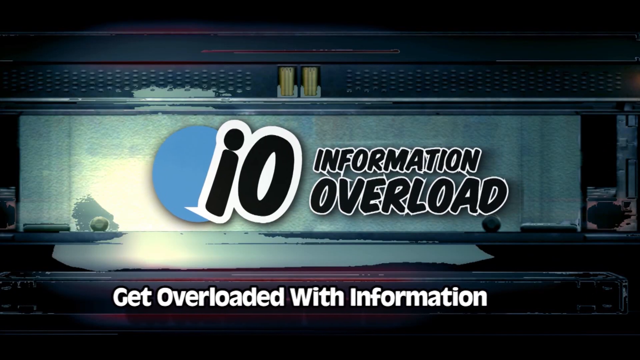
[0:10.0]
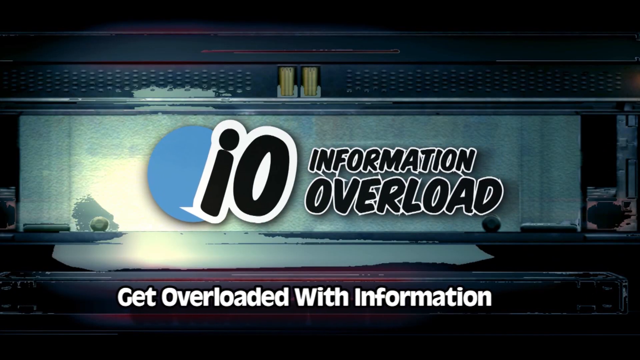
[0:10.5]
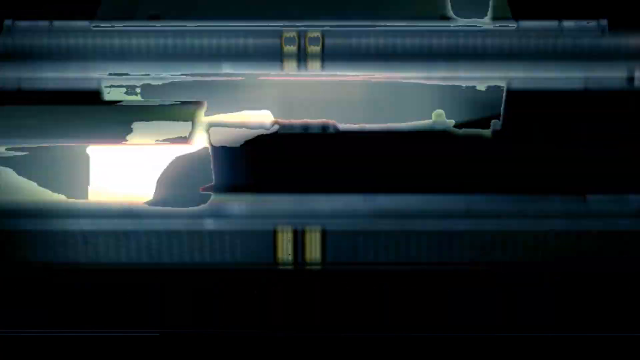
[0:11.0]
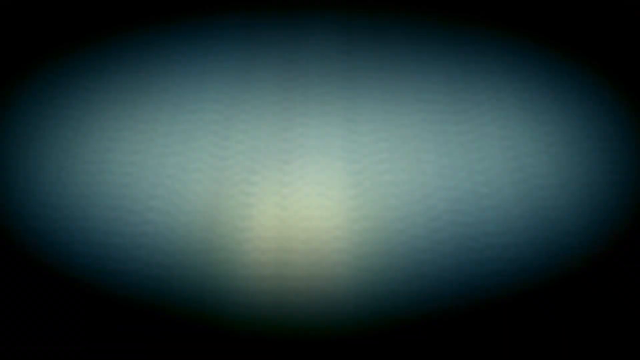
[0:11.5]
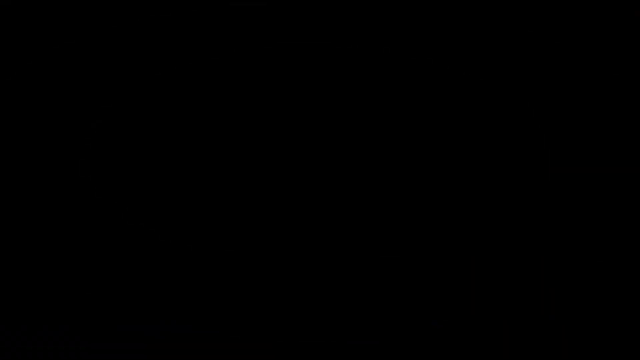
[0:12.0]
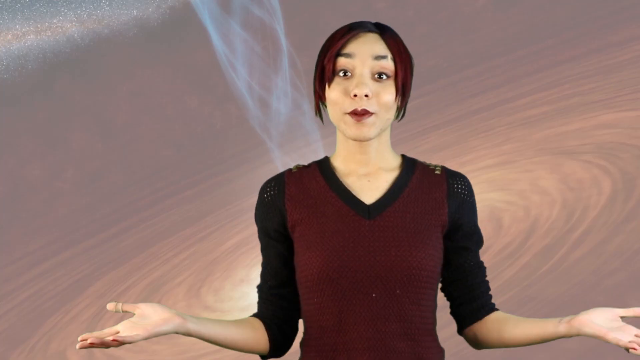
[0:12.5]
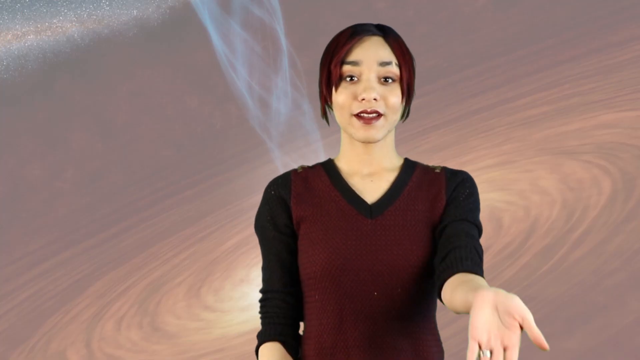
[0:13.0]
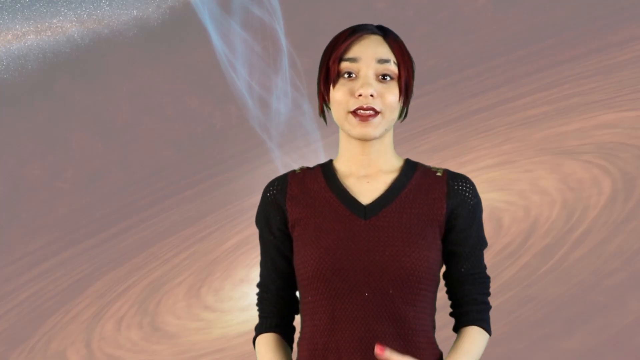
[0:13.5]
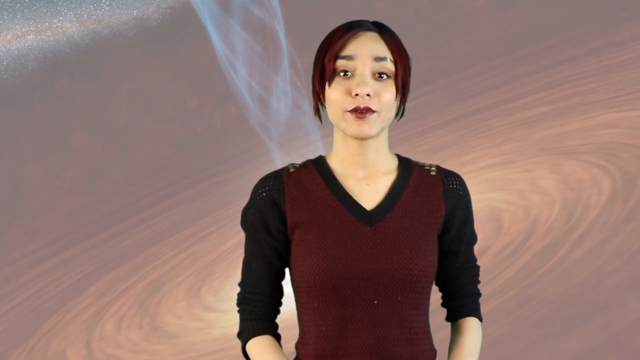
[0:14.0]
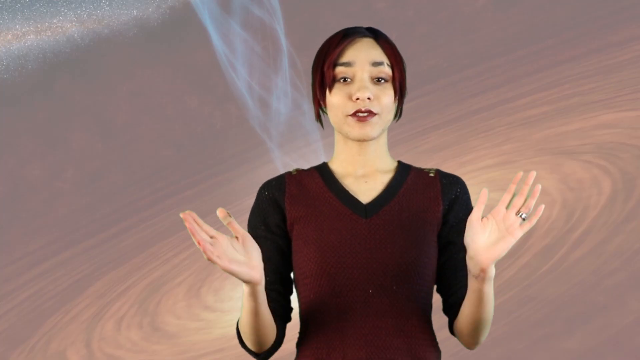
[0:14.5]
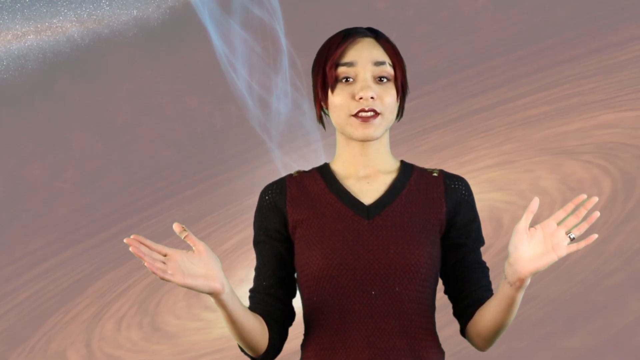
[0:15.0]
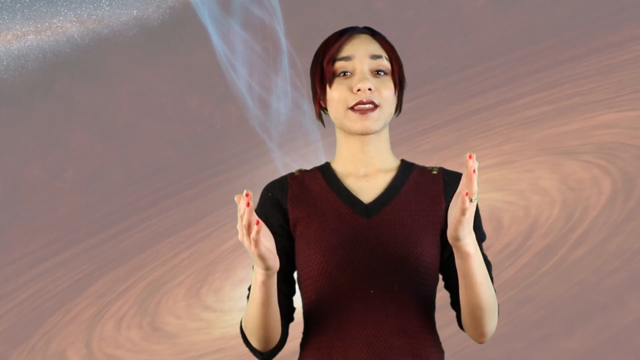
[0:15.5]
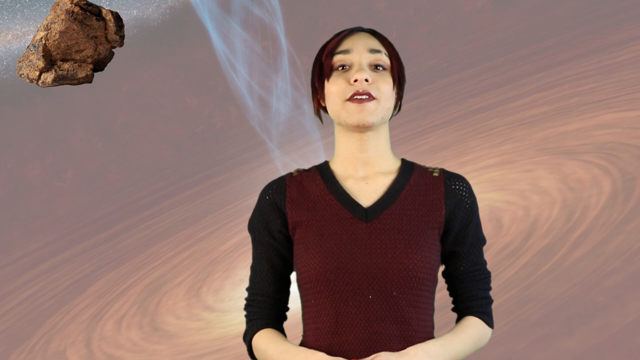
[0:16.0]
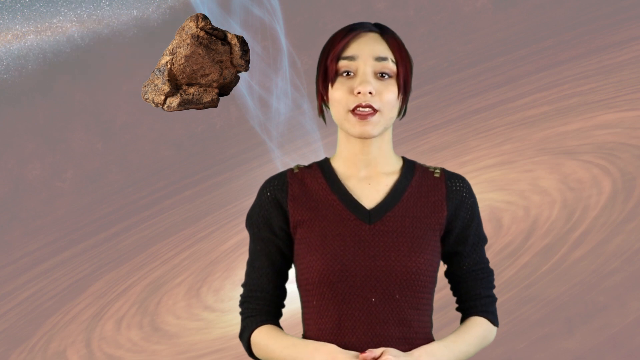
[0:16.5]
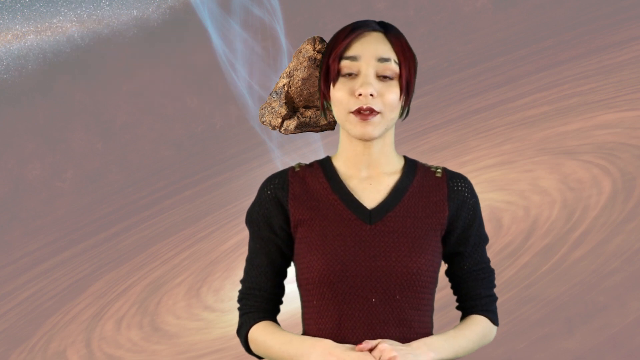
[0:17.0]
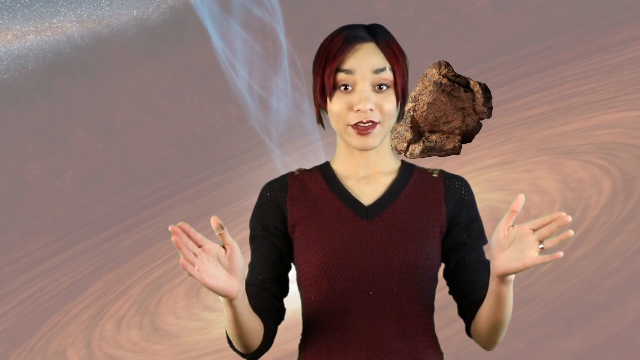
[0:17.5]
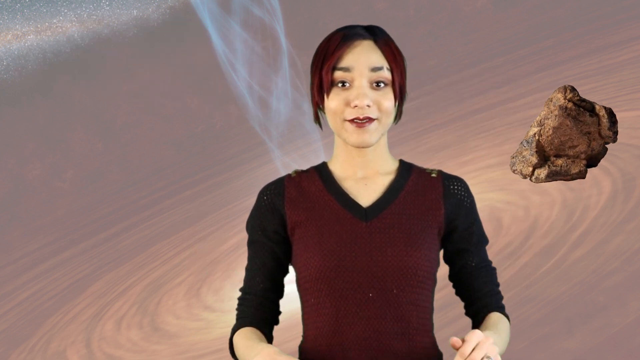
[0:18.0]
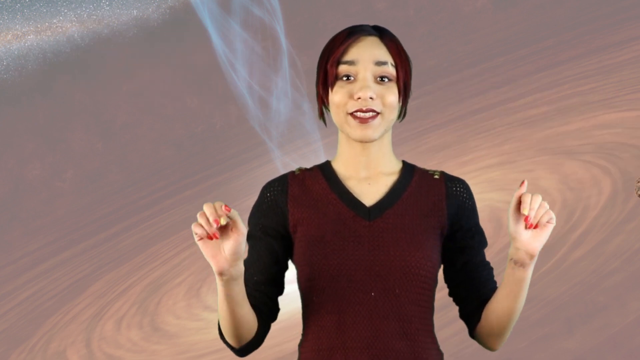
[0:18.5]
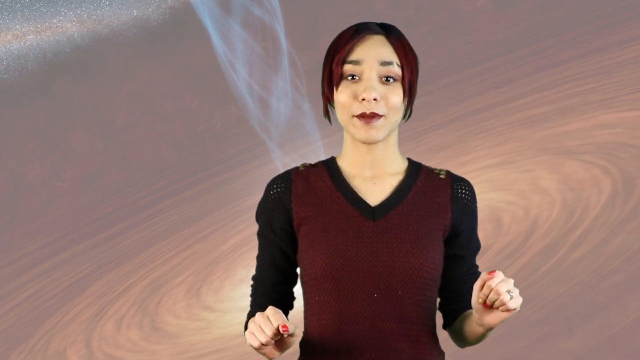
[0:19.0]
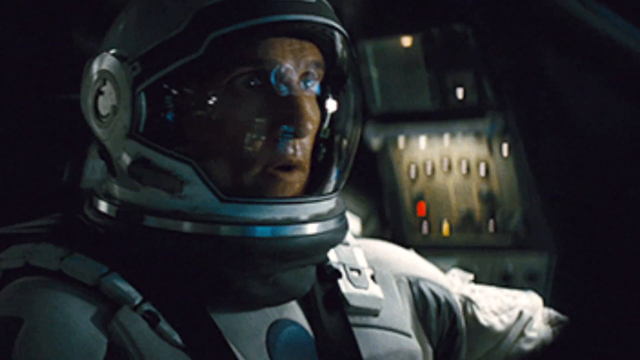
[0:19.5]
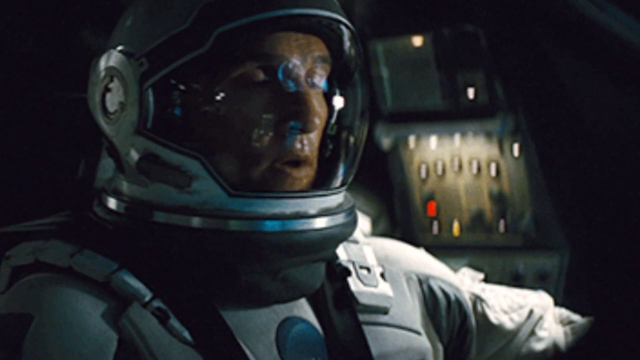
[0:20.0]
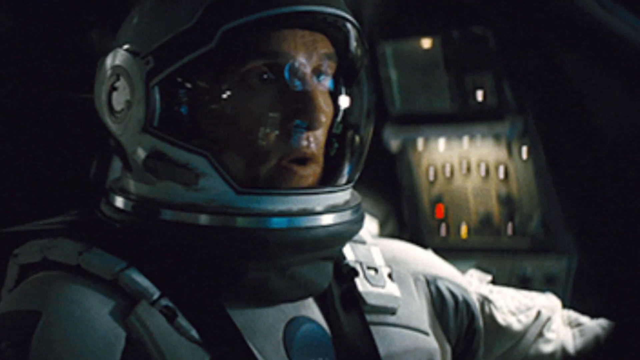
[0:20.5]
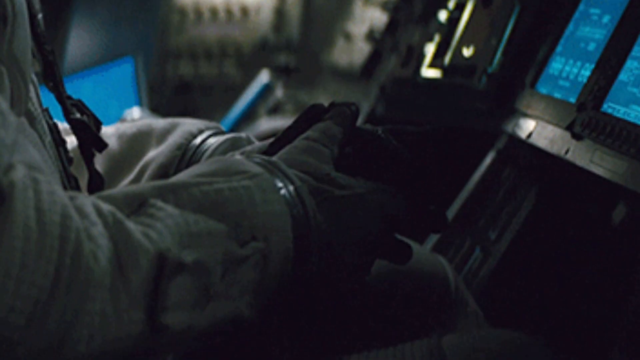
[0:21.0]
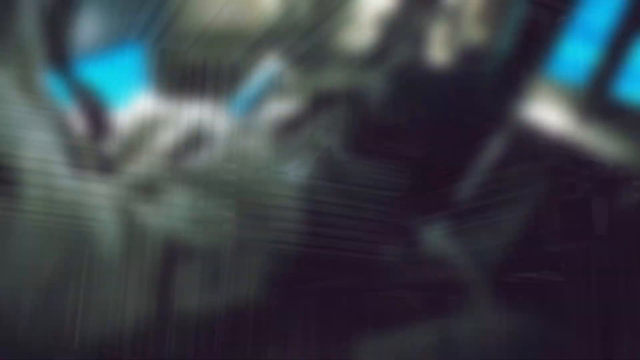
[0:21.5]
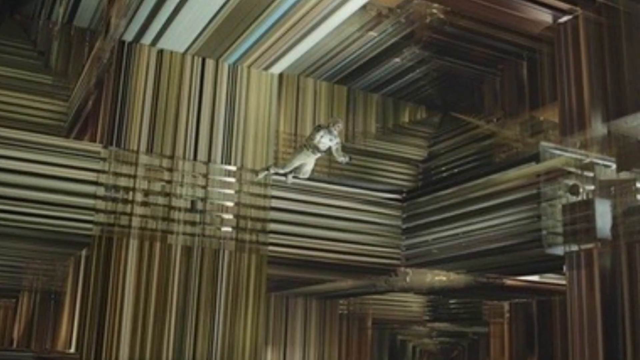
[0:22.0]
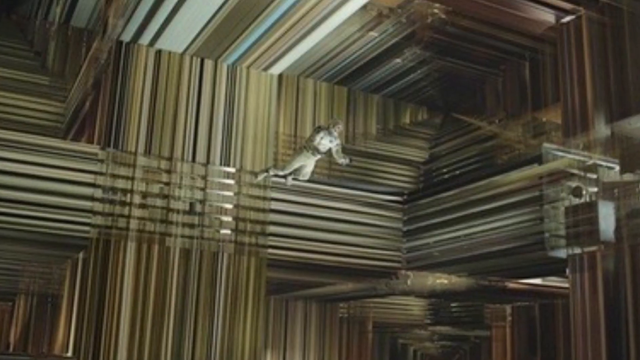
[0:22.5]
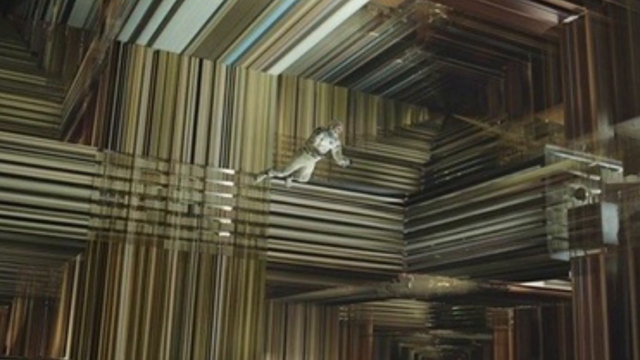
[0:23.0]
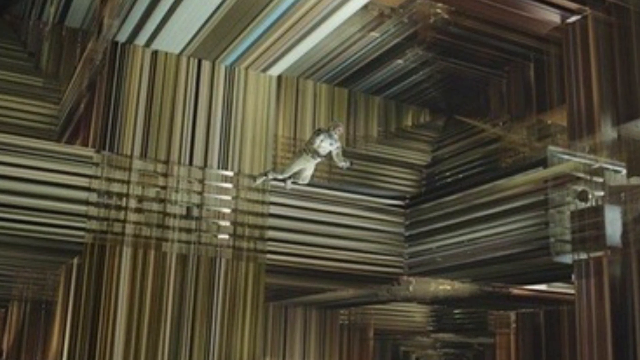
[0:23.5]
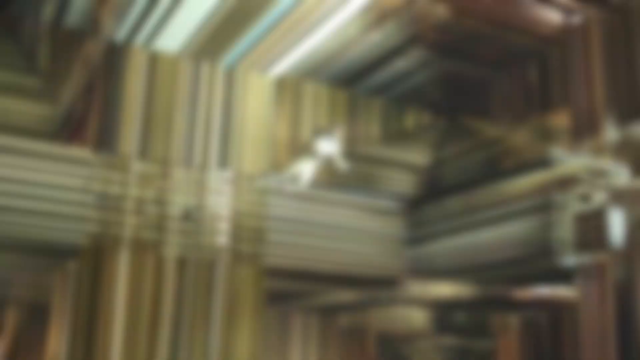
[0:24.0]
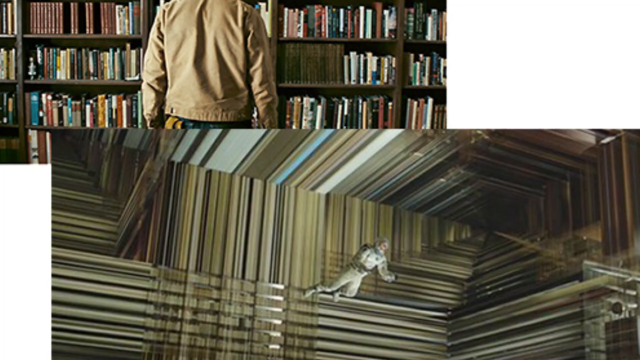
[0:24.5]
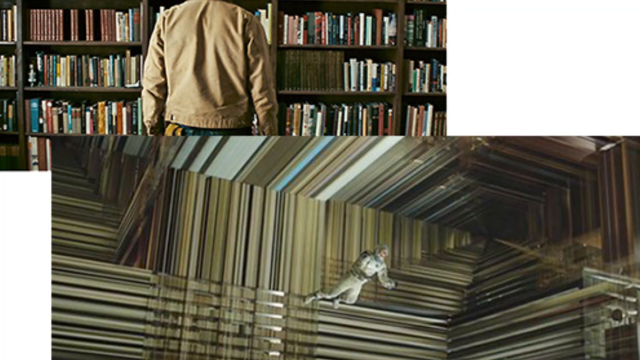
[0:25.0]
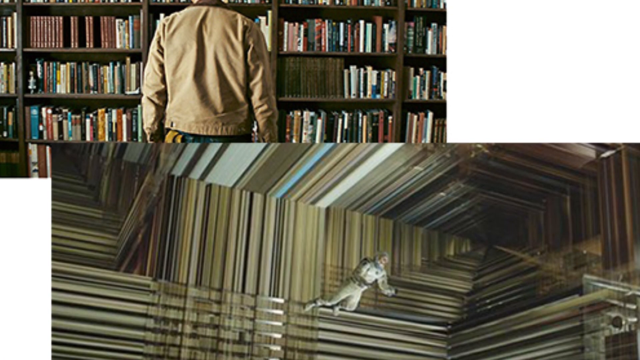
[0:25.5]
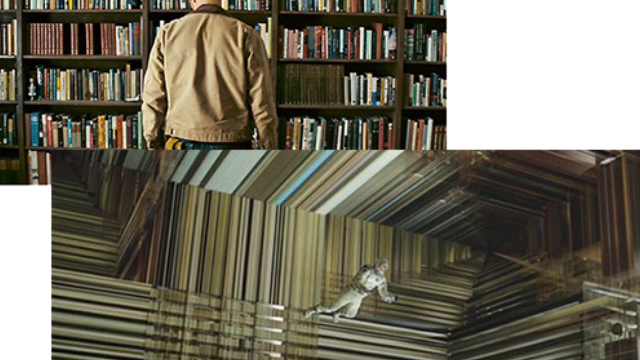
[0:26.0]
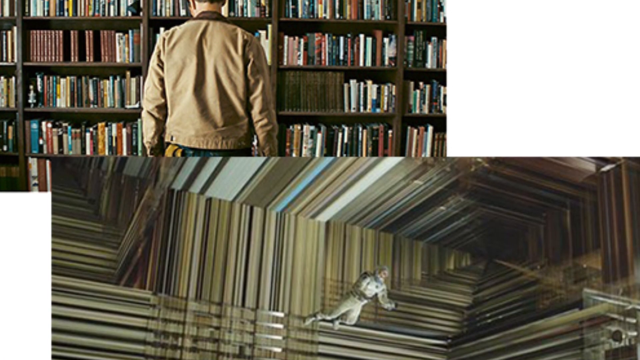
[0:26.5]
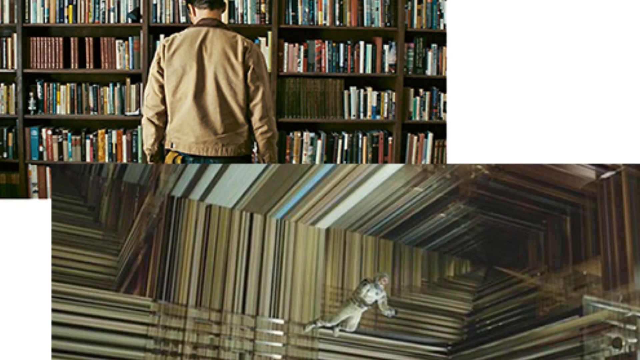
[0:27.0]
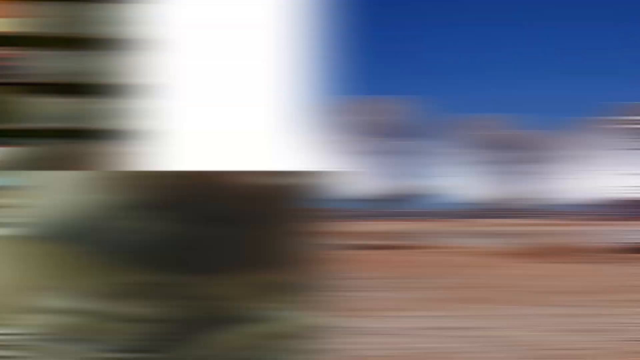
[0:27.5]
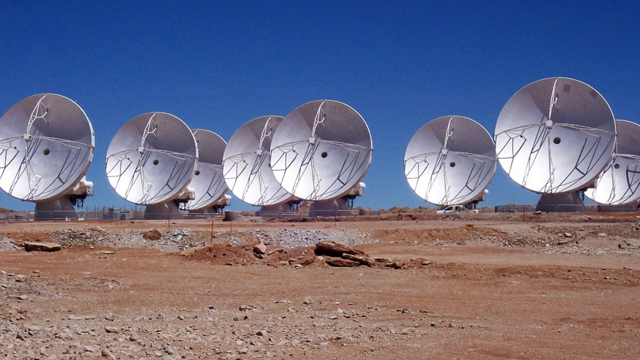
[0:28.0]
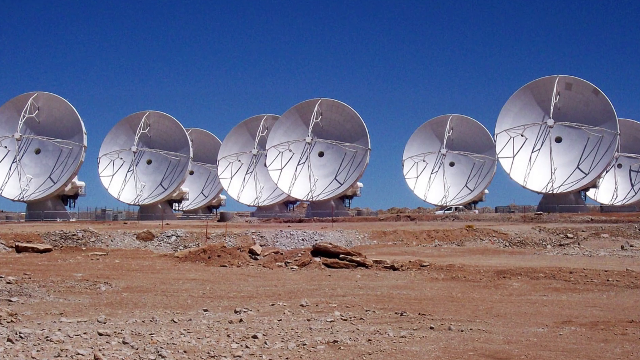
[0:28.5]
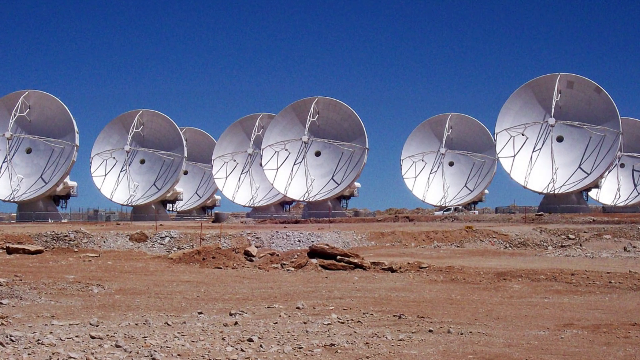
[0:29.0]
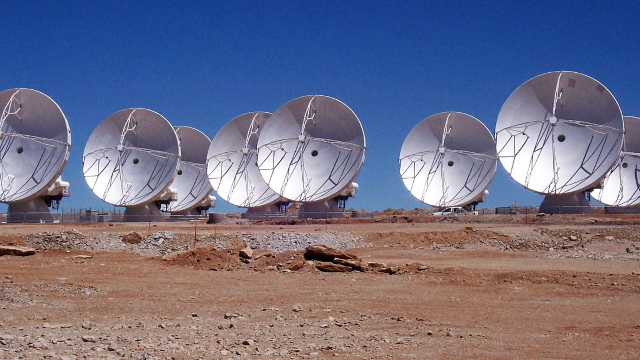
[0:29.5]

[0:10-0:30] The words disappear, and the metallic thing in the middle kind of twists and vanishes off the screen, leaving an all-black background. The shot returns to the girl, who stands a little right of center facing the camera. Her hands move out; the left hand goes down while the right comes up, palm toward the camera and fingers pointing downward, then she brings it back toward her chest and drops it. She raises both hands, palms toward the camera, a little out to her sides at about shoulder height, looking directly at the camera as she talks, then brings them a little closer together. A diagram of a rock comes flying from the top left down toward her, passes behind her head and goes off the right side as she holds her hands up, bent at the elbows, palms toward the camera, about shoulder high, moving her body as she talks. The video cuts to a still shot of Matthew McConaughey in a space suit from the movie Interstellar, facing to the right with a little reflection on his glasses. The view goes down to show him moving the joystick of a controller. Next he is floating inside a room, in the center and far away in the distance, with little metallic, flat surfaces all over, as the view slowly zooms in. That image then takes over the bottom half, while in the top half, overlaid behind it, the back of a man in a brown shirt looking at a bookshelf appears as the view pans up. It then cuts outside to a blue sky with seven silver satellites staggered across, pointing forward and slightly up to the left, each with bars going across and up and down and a circle in the center. Dirt runs across the bottom as the view slowly zooms in a little to the right.